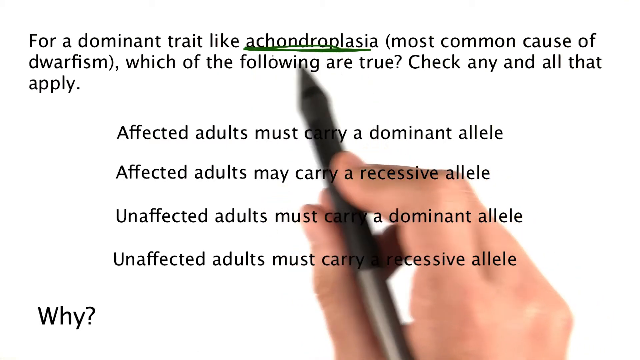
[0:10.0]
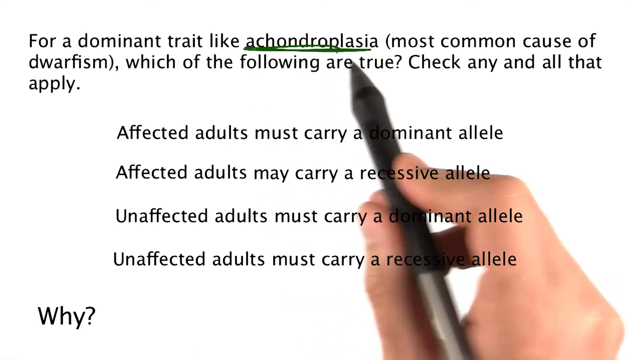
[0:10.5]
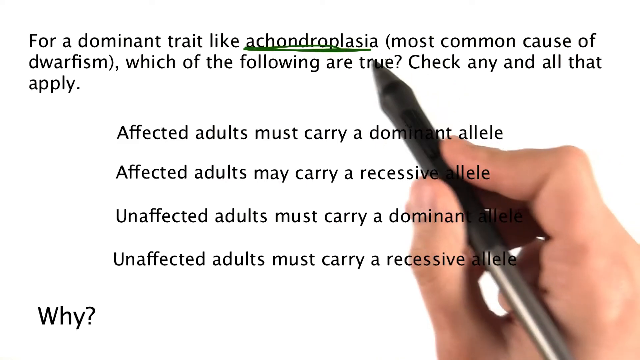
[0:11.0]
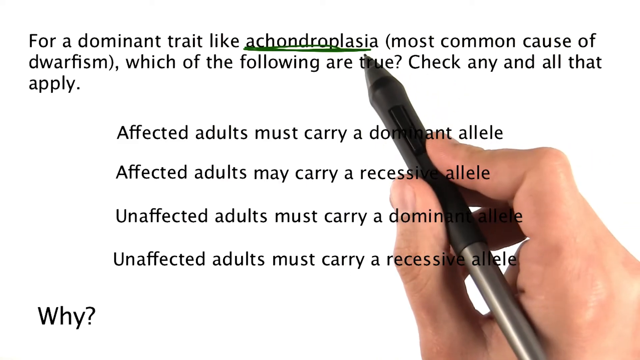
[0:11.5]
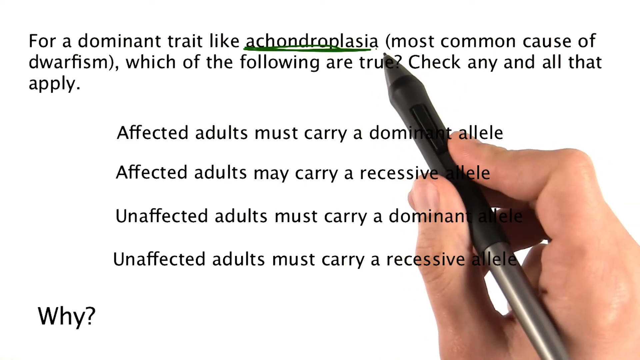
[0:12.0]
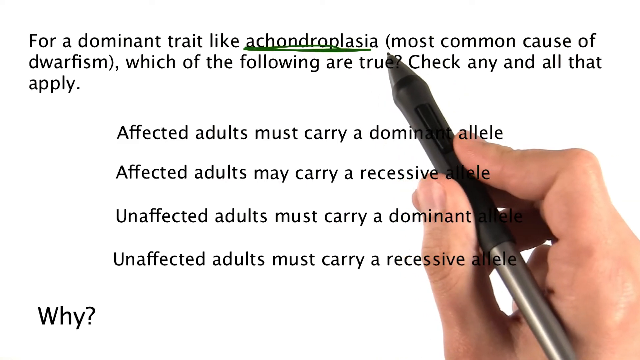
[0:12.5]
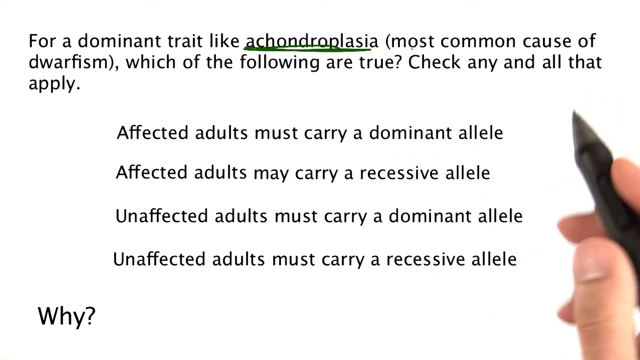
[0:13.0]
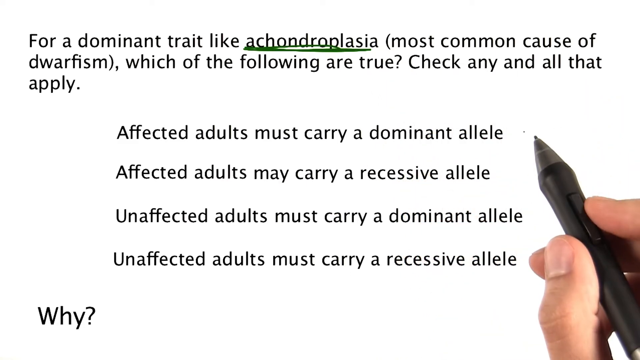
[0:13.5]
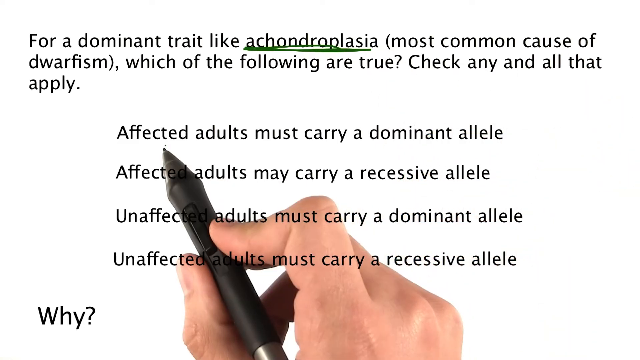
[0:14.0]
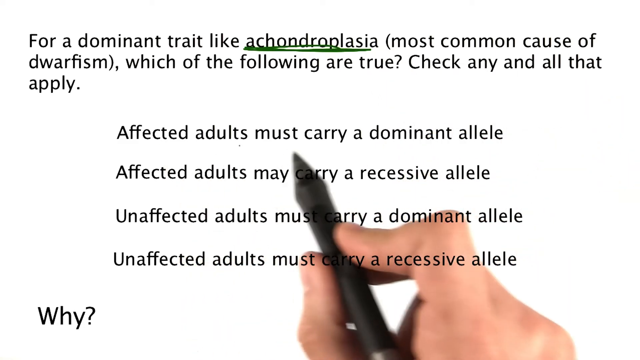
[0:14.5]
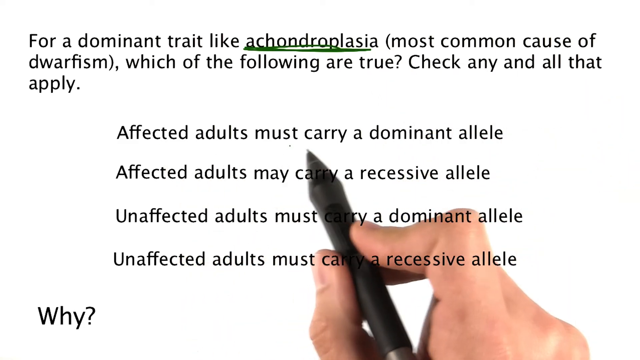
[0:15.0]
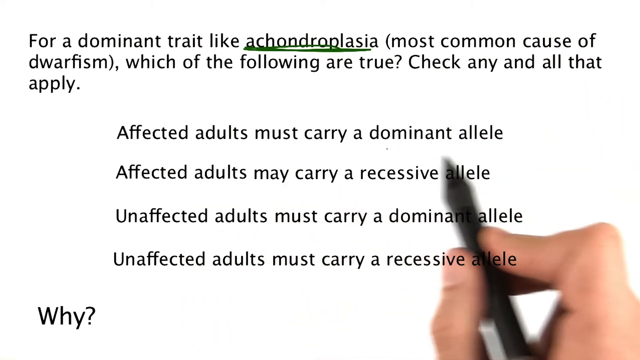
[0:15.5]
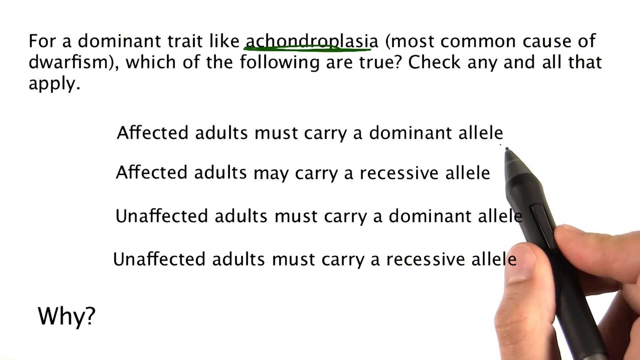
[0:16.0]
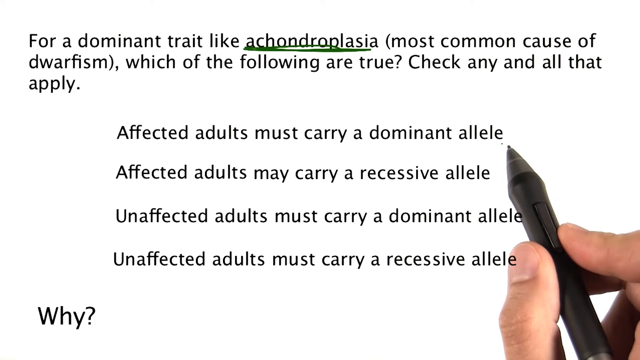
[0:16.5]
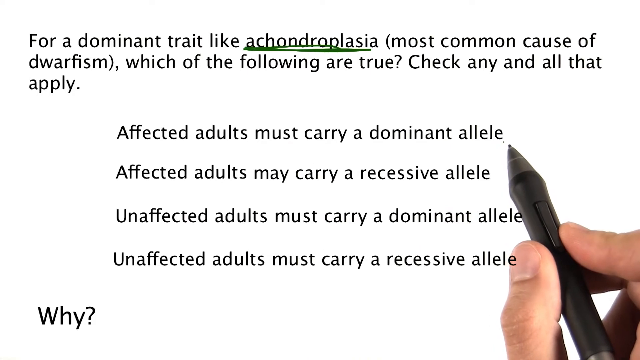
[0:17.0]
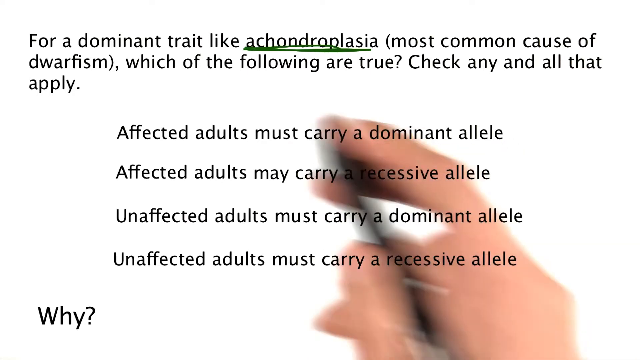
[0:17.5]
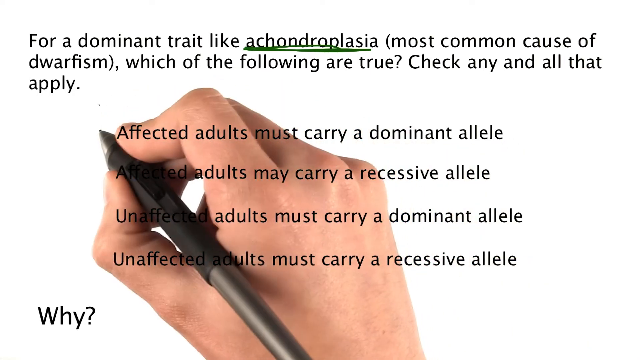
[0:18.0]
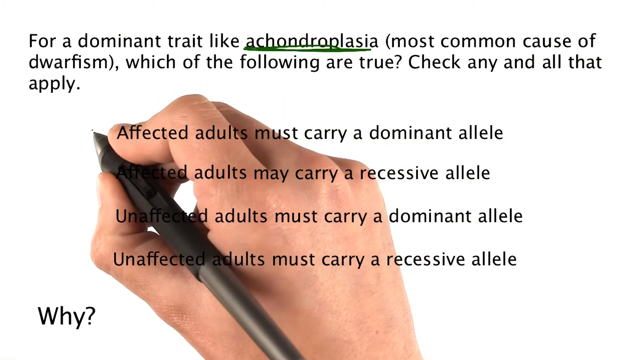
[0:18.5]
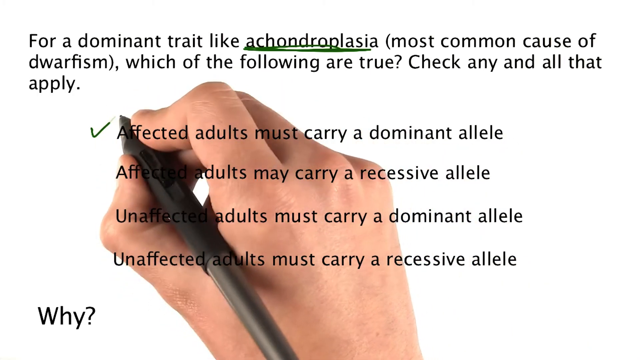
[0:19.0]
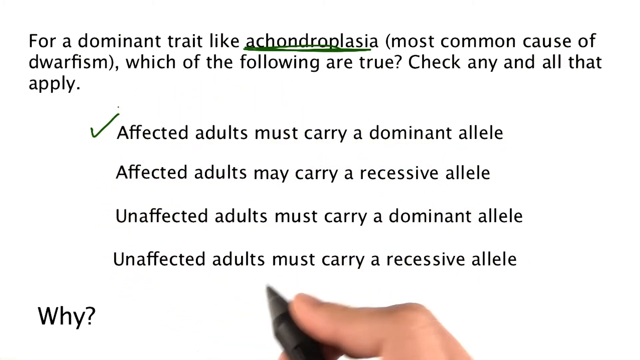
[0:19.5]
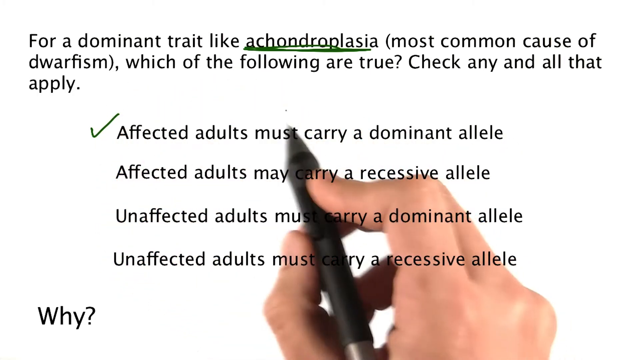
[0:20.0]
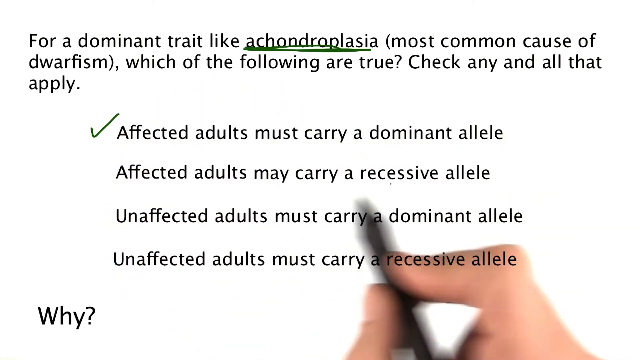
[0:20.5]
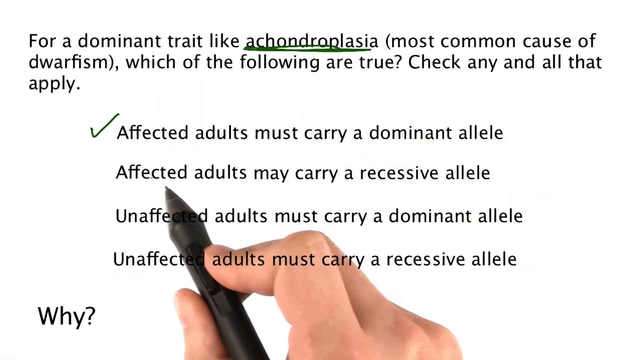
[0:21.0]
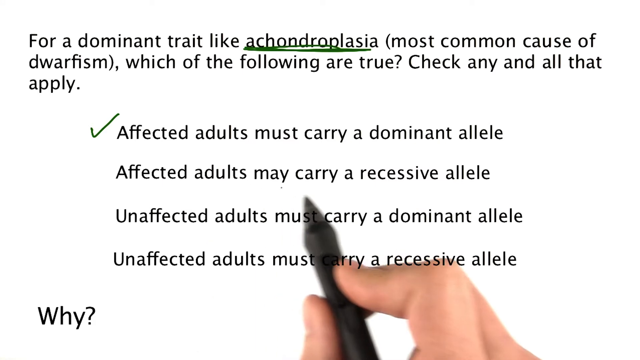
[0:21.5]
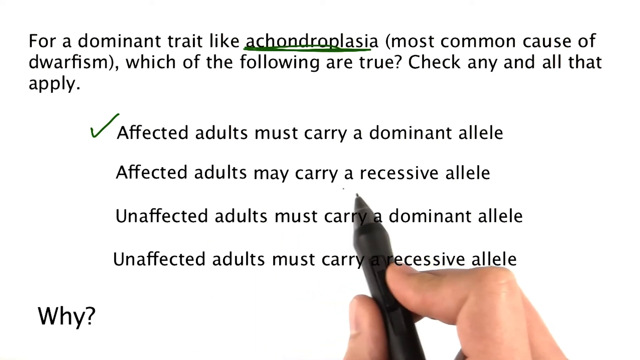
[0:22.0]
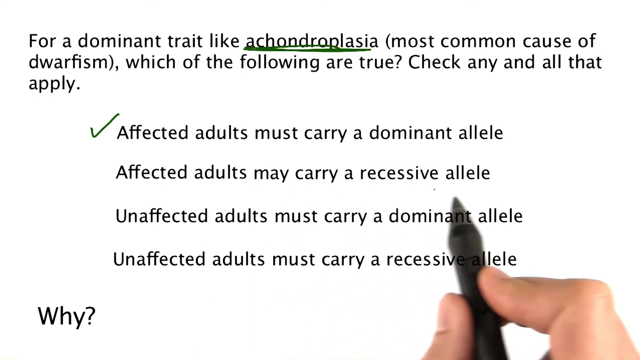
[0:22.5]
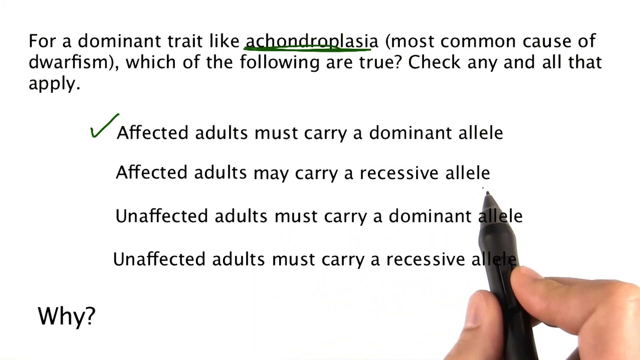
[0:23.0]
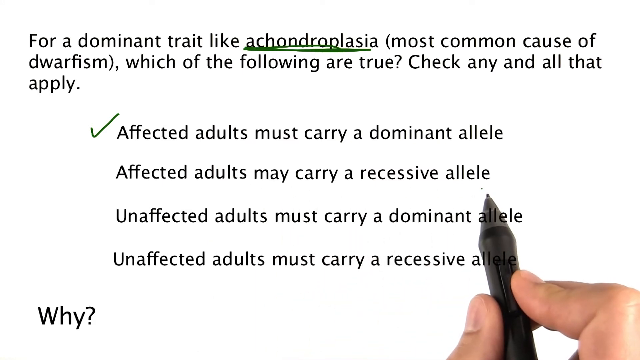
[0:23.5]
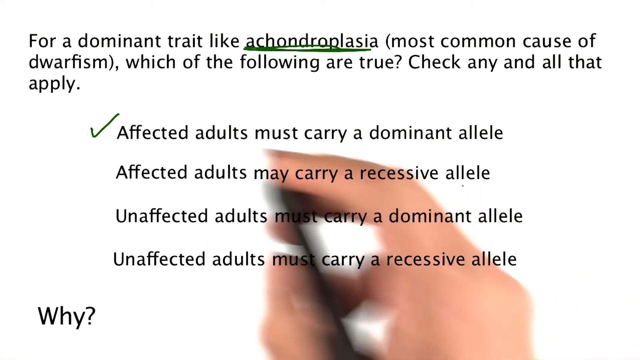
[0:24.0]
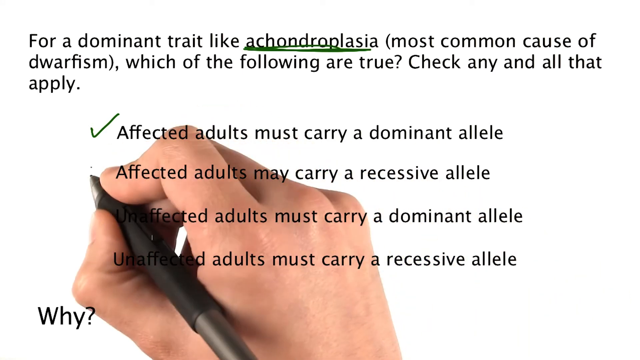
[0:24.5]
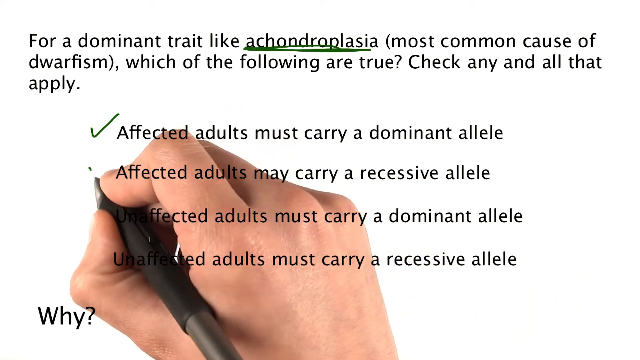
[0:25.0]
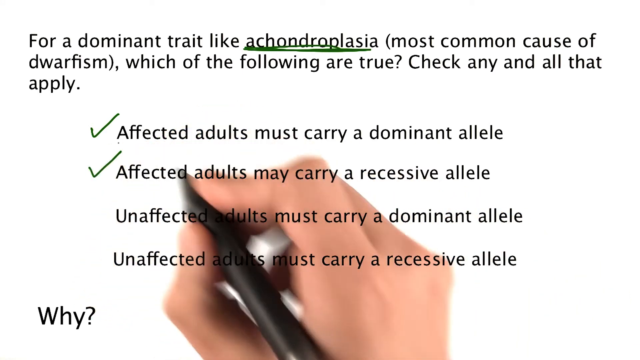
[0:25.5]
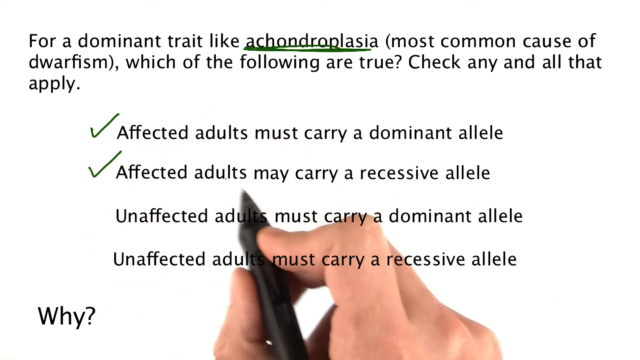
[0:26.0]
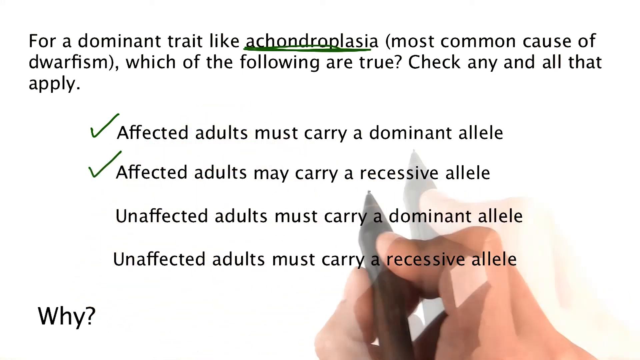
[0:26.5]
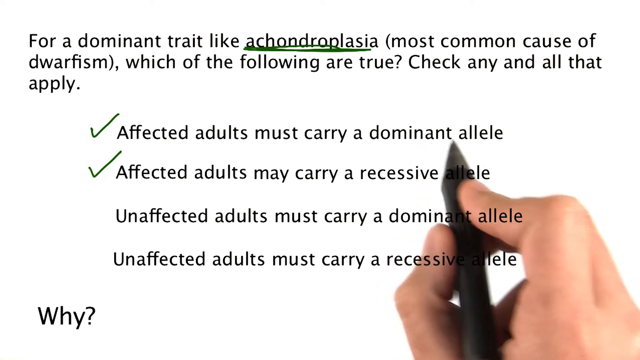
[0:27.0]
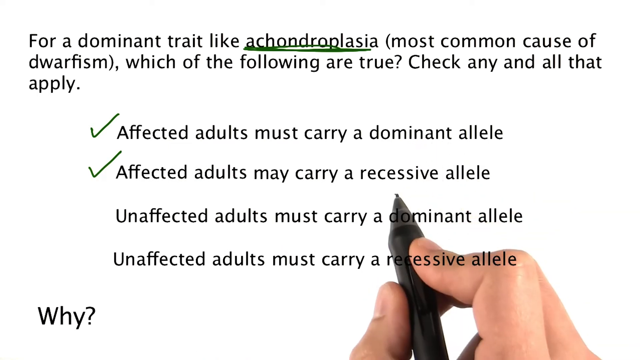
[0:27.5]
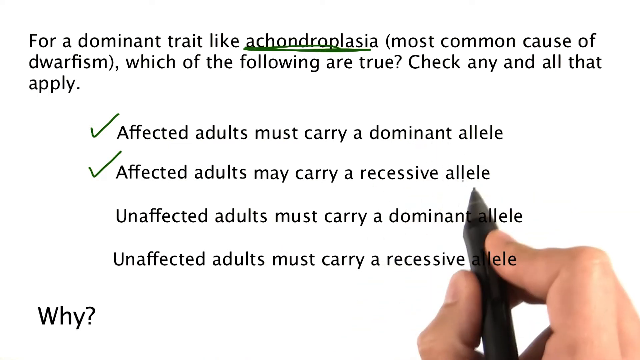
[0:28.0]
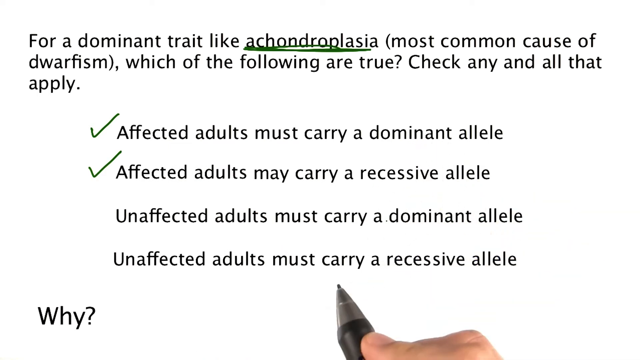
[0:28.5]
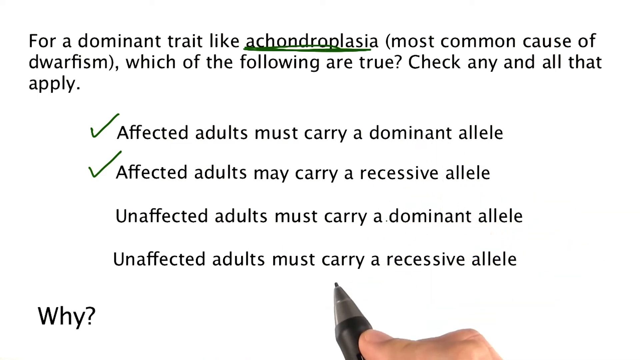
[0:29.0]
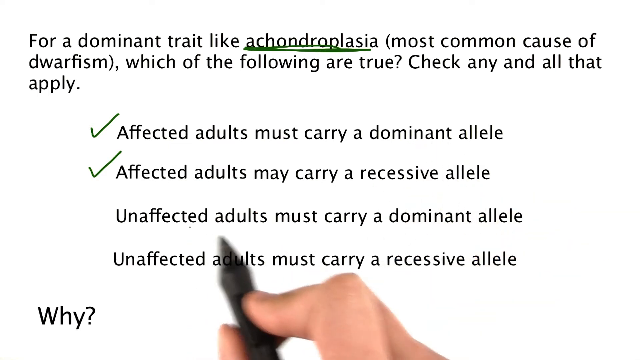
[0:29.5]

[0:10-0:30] The hand keeps moving. It moves to "affected adults must carry a dominant allele," then to the second statement, "affected adults must carry a recessive allele," ticking it as well. It then moves to "unaffected adults must carry a dominant allele," but it is not shown whether a tick is made on the left-hand side there. The pen is black and writes in green ink.